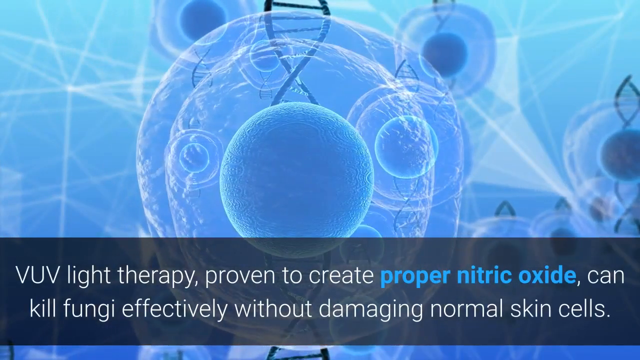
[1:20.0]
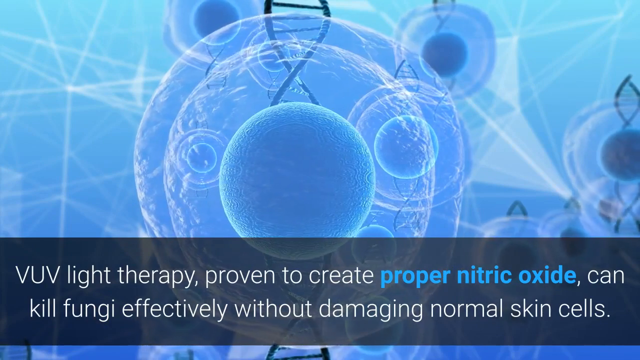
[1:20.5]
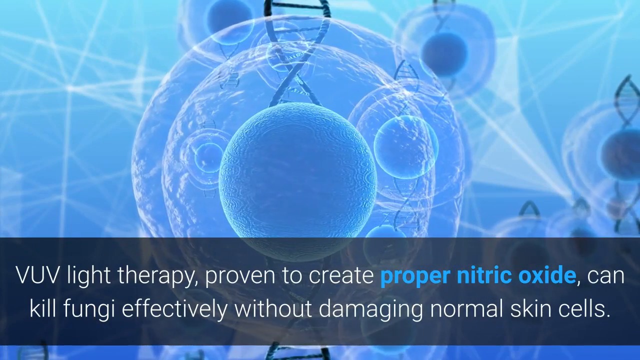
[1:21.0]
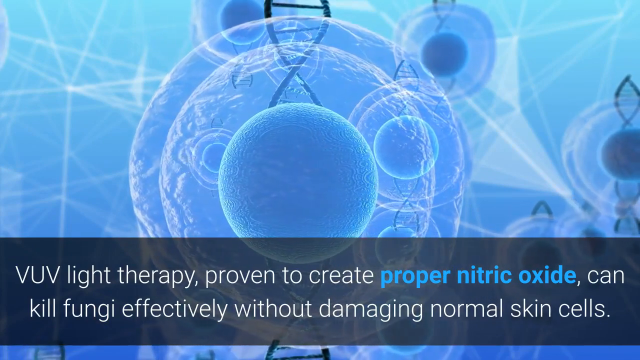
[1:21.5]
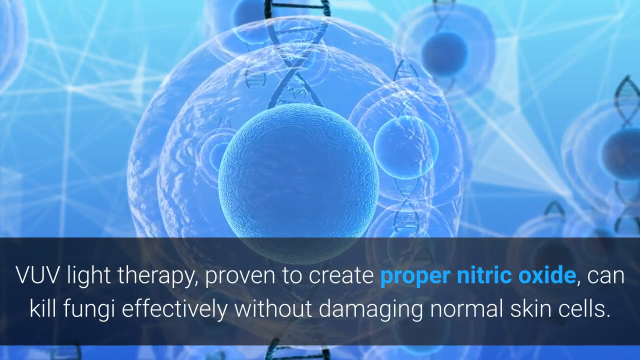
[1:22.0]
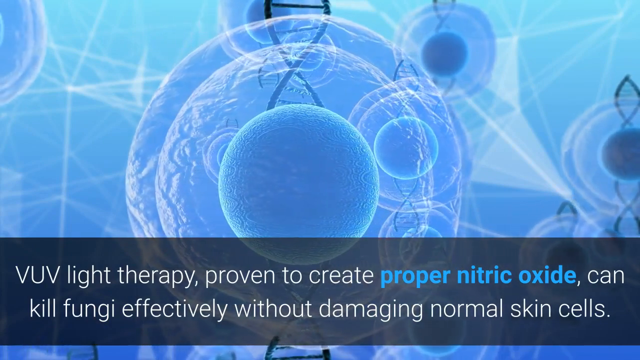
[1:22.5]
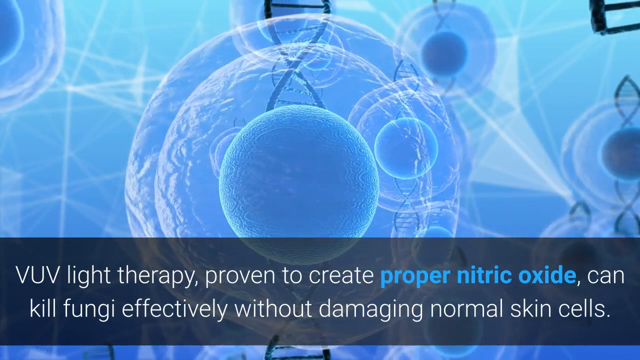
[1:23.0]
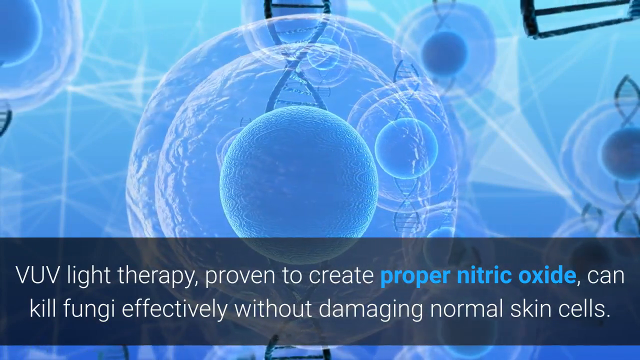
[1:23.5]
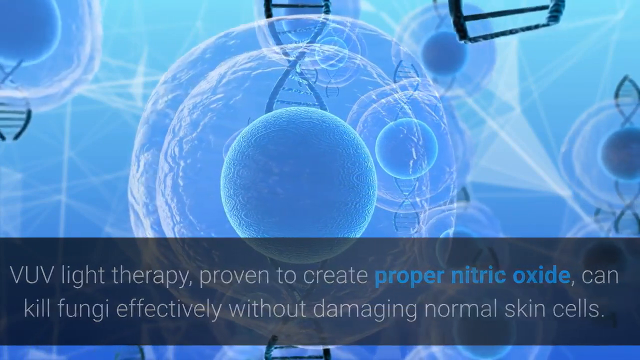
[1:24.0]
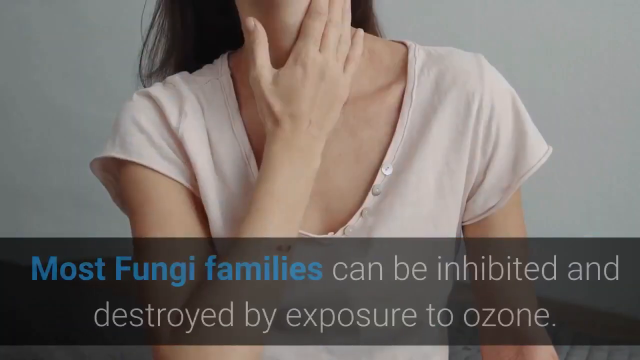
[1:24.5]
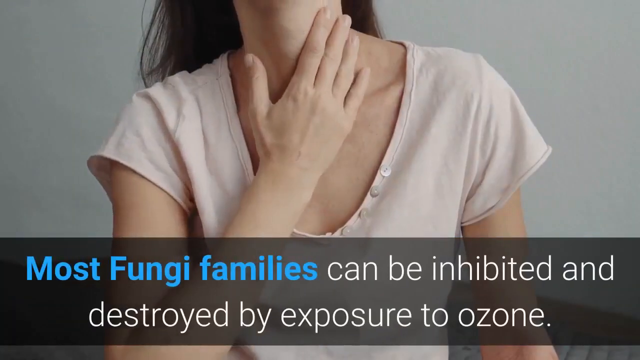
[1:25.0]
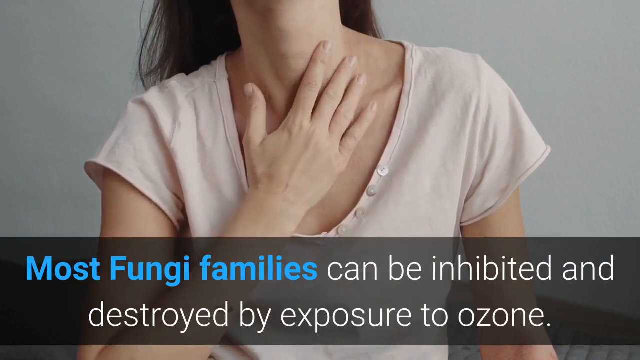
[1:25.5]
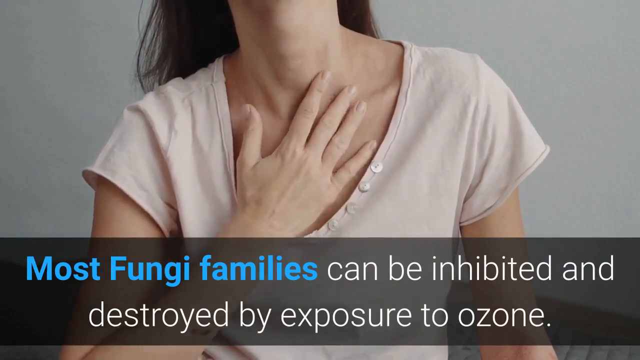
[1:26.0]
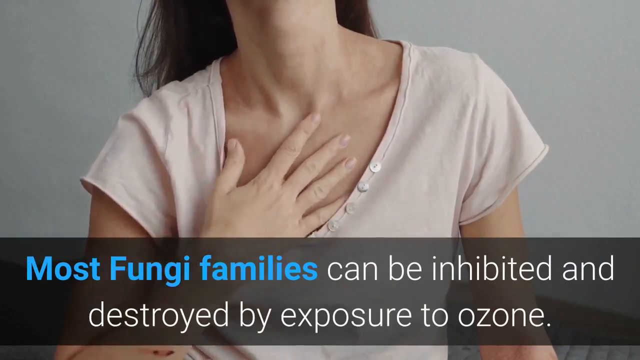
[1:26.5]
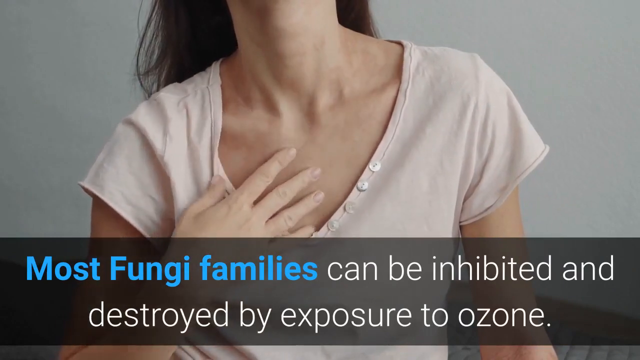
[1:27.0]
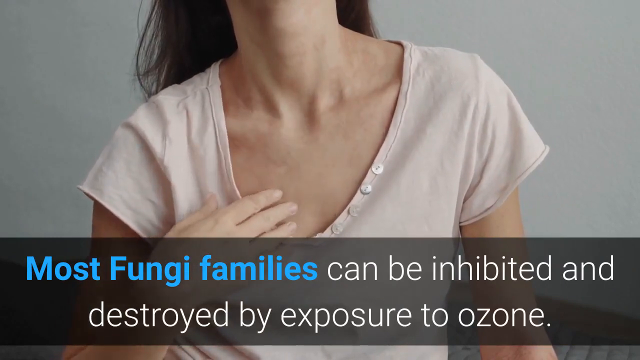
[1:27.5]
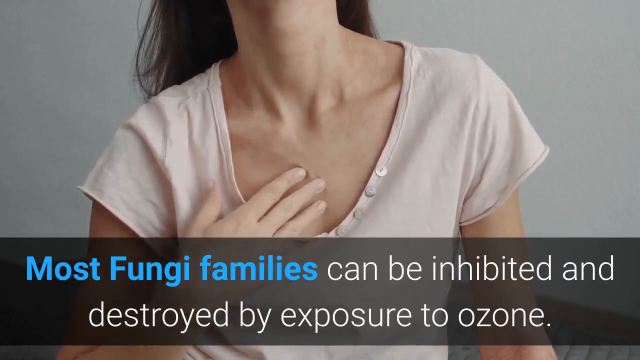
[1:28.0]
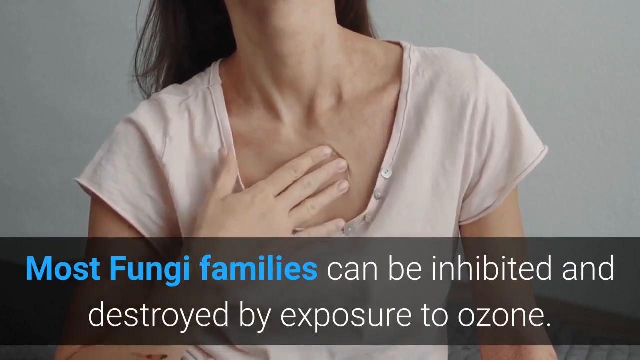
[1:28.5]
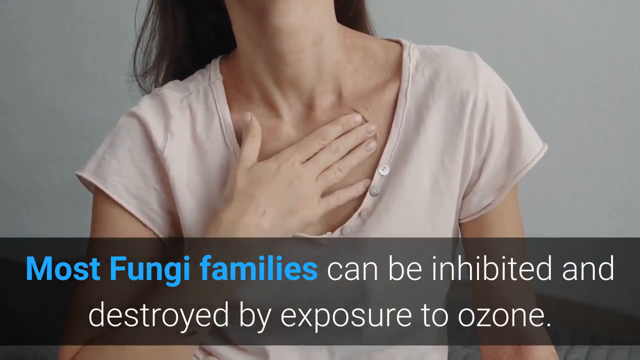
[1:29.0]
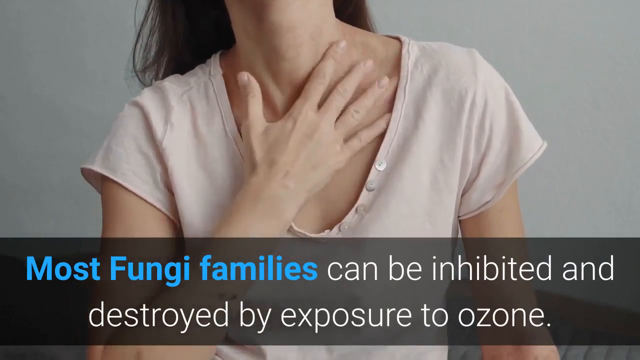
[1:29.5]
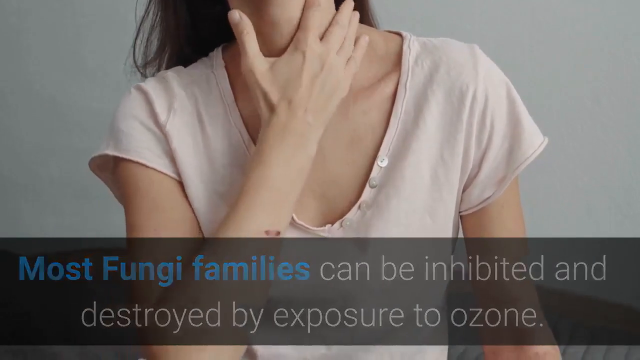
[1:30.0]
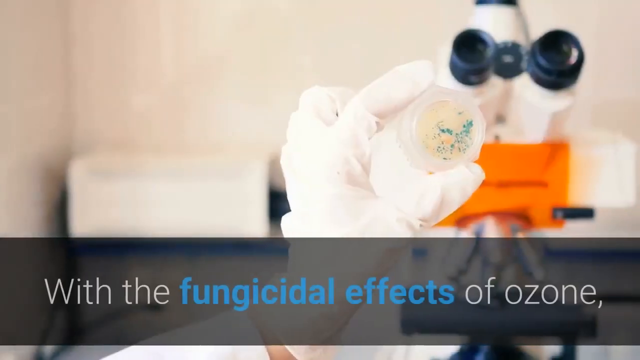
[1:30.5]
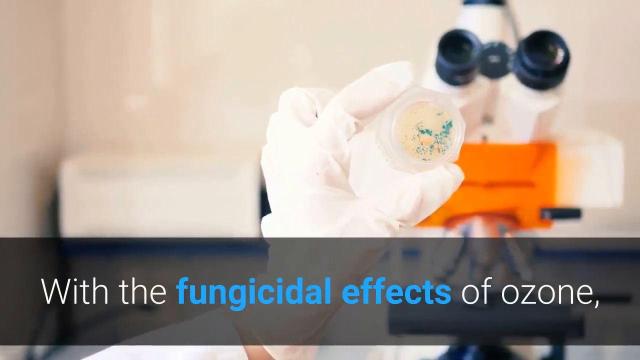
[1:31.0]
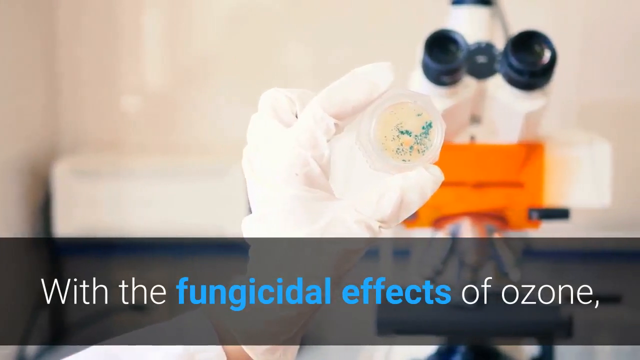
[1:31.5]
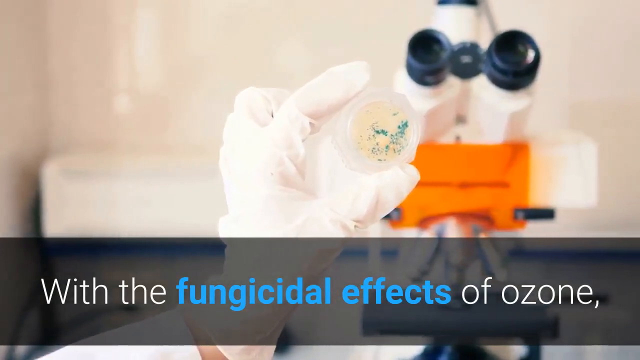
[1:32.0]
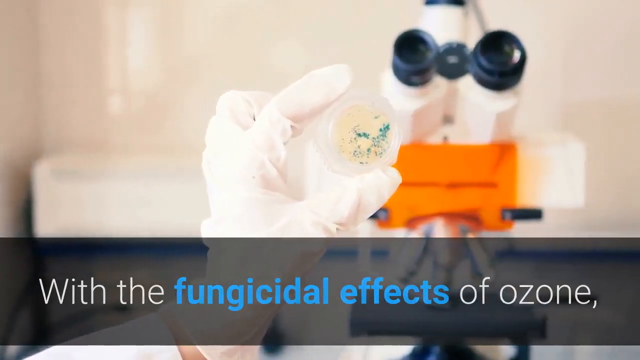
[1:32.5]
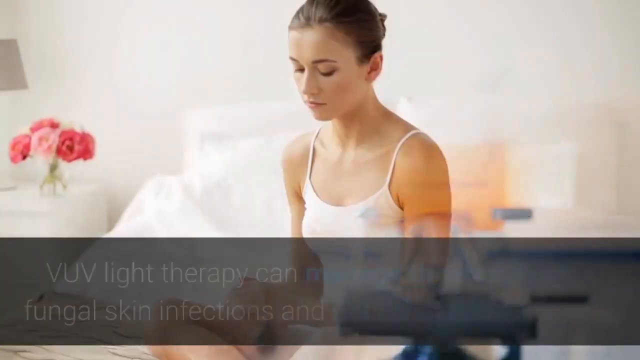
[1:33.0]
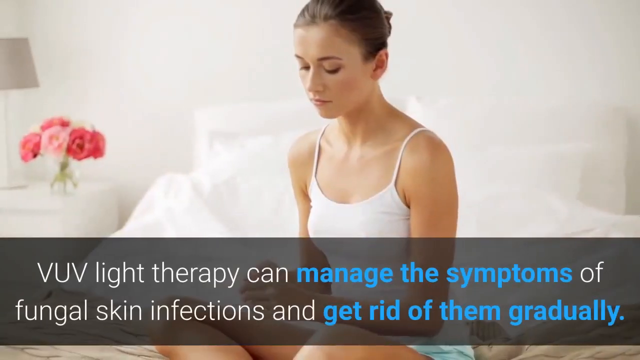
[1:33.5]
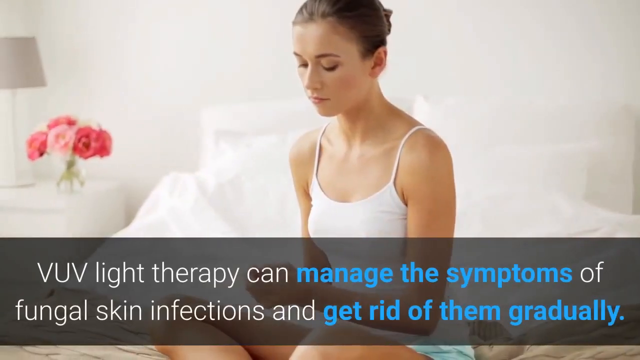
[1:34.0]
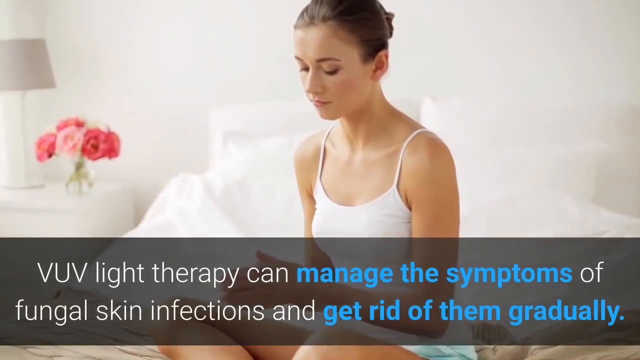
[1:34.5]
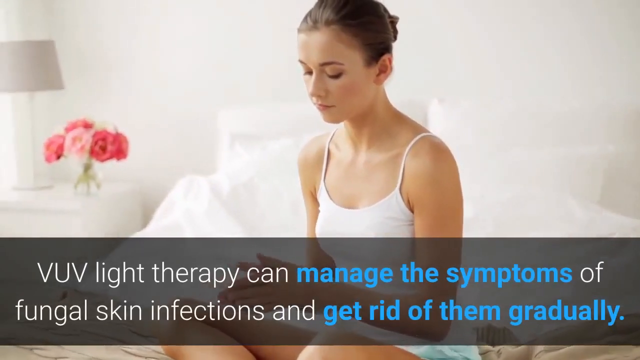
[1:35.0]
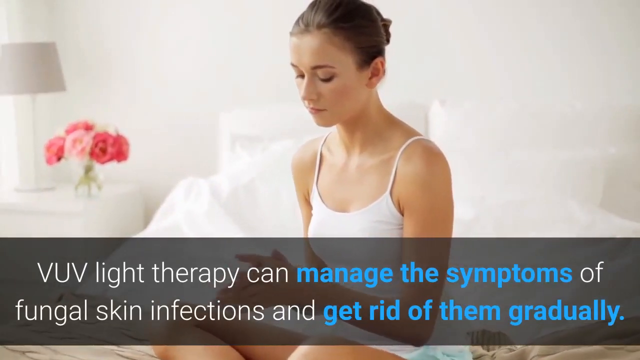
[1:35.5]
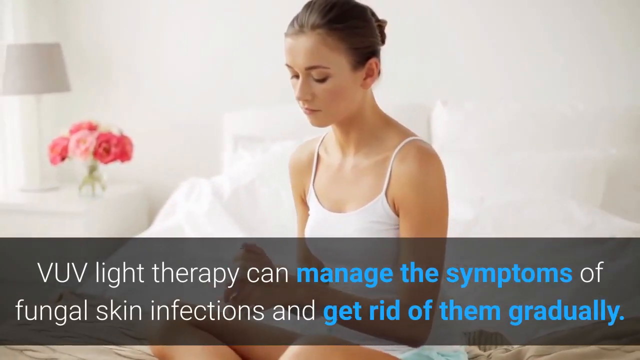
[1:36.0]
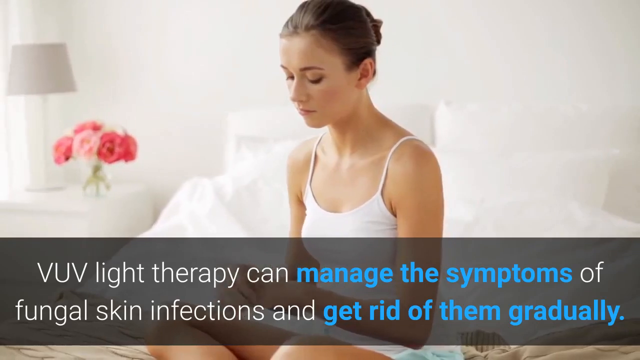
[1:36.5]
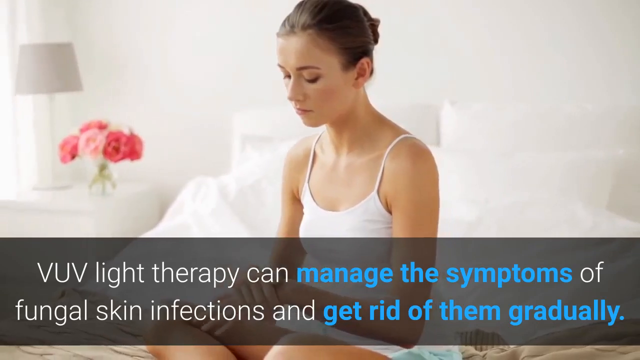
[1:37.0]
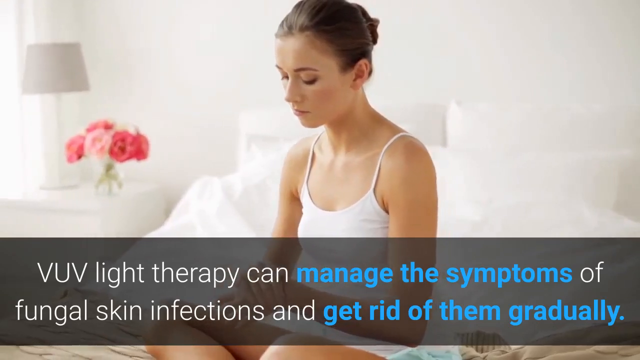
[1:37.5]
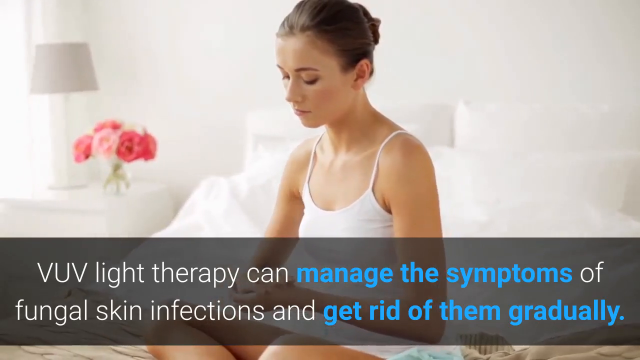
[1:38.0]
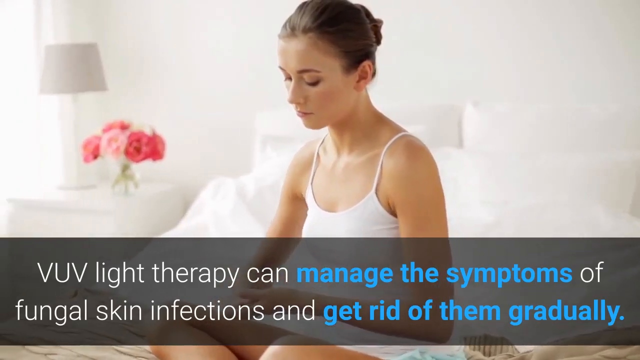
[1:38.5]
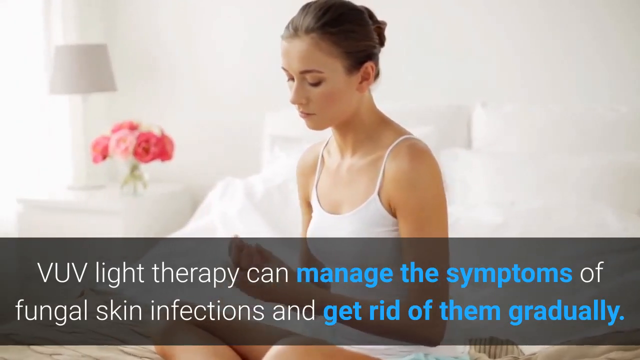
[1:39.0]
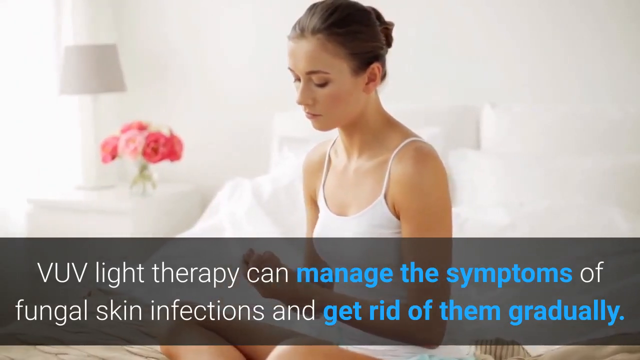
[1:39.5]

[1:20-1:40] The blue orb cell with the DNA on top is shown. A new screen then shows a woman from just below her chin to about her waist, wearing an off-white or light pink V-neck t-shirt. Her right hand is on the left side of her neck, and she rubs the area down toward her right breast and back up. The text at the bottom reads "Most fungi families can be inhibited and destroyed by exposure to ozone", with "Most fungi families" in blue and the rest in white, and the background behind her is a muted gray. Next, a white-gloved right hand holds a petri dish between the thumb and index finger. In the faded or blurred background are a microscope on the right, some type of white box or trash bin on the left, and white balls. The text in the translucent black banner at the bottom reads "with the fungicidal effects of ozone." A woman then sits on a white bed wearing a white tank top, her head lowered slightly and her eyes closed, rubbing her hands together in a motion similar to washing hands or putting on lotion. The walls, headboard and pillows are white; everything in the room is white except on the nightstand to the left, where there is a clear vase with at least five roses in shades of pink and, next to the roses, a white lamp. The text at the bottom reads "VUV light therapy can manage the symptoms of fungal skin infections and get rid of them gradually."